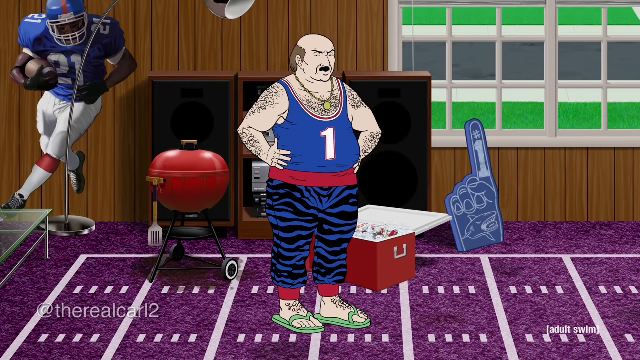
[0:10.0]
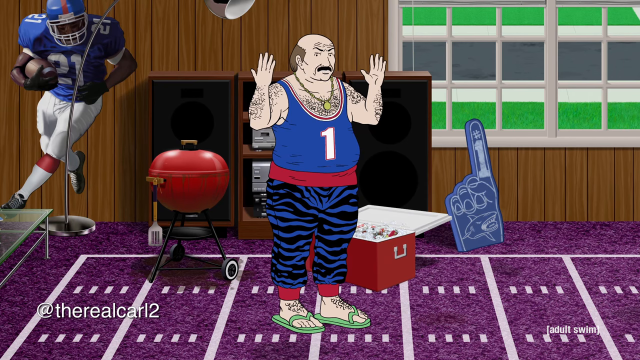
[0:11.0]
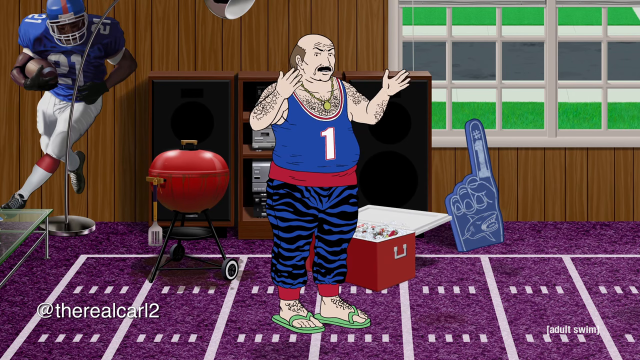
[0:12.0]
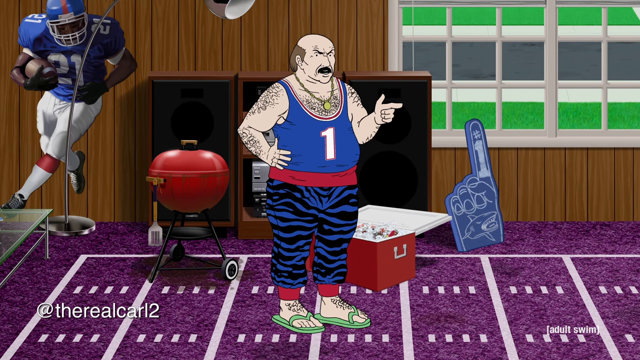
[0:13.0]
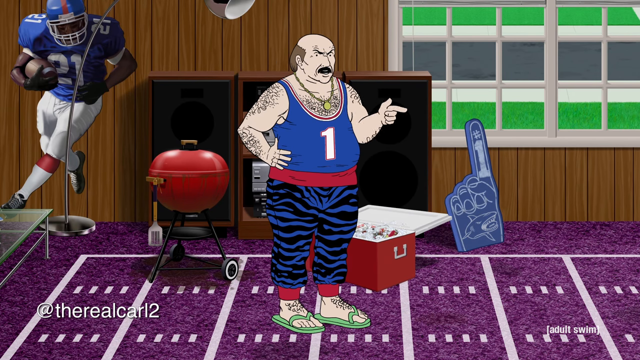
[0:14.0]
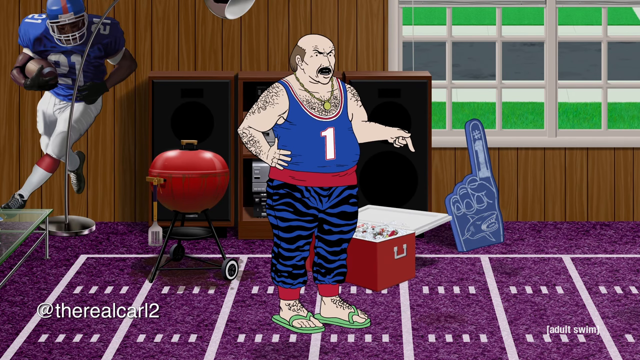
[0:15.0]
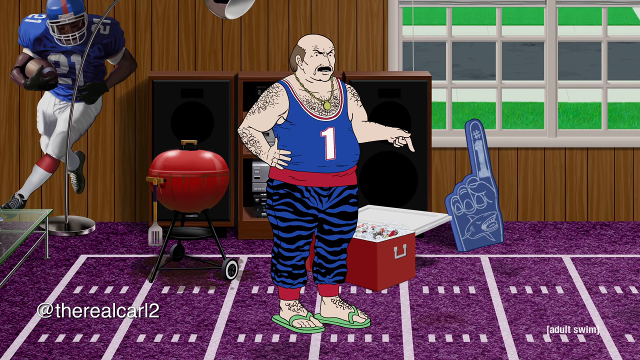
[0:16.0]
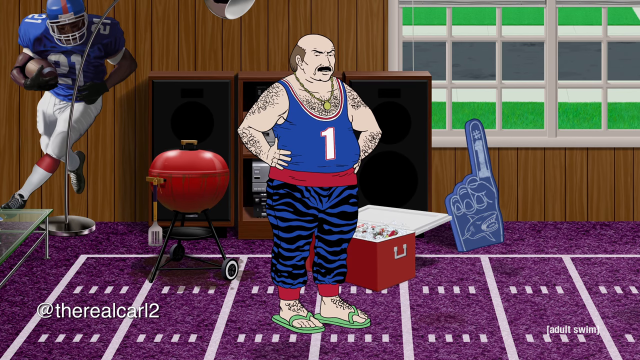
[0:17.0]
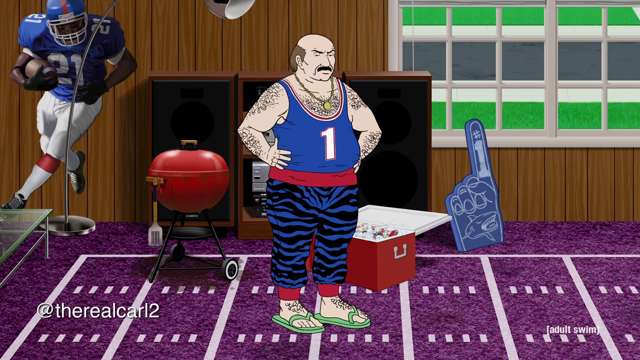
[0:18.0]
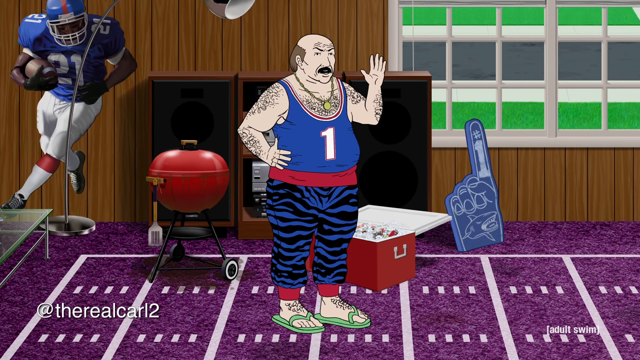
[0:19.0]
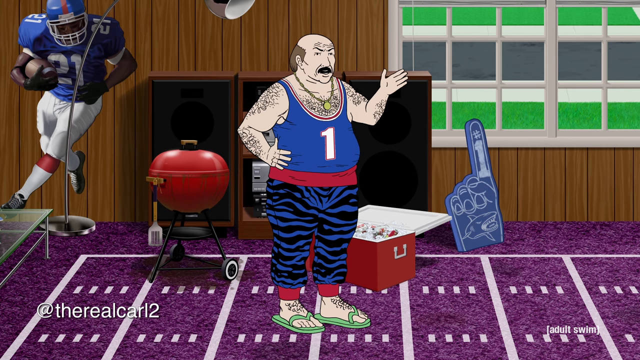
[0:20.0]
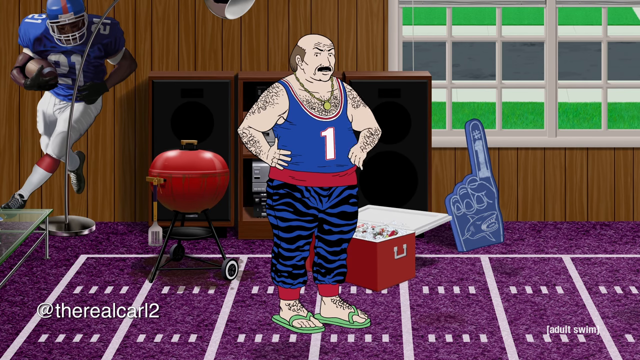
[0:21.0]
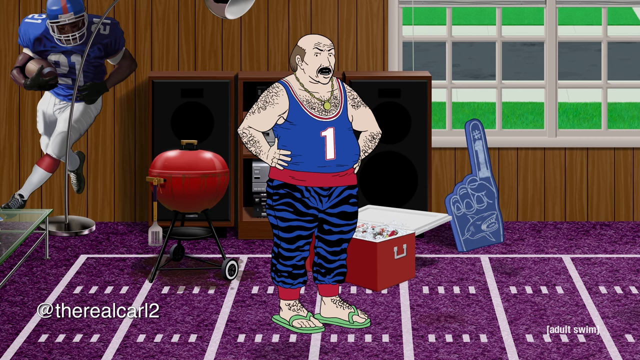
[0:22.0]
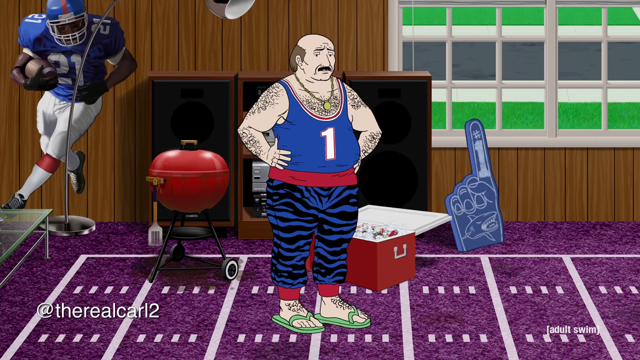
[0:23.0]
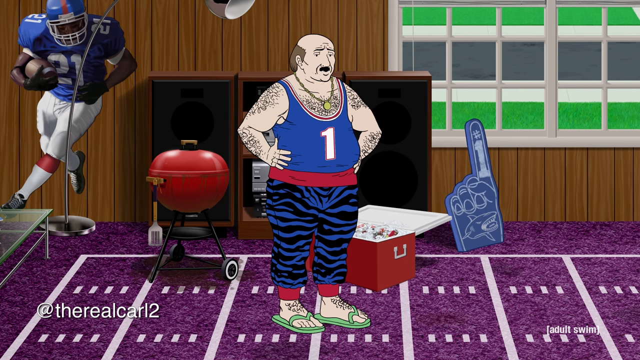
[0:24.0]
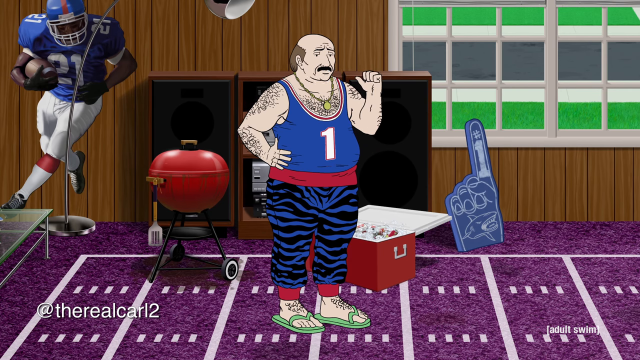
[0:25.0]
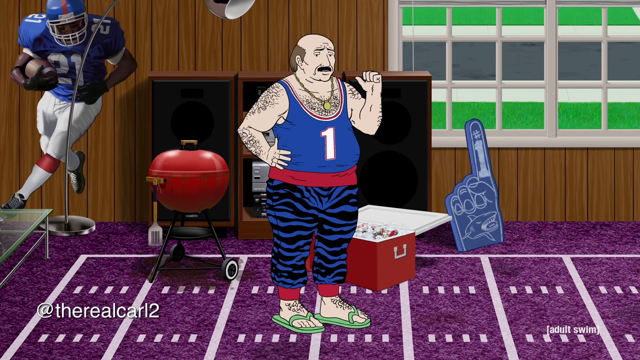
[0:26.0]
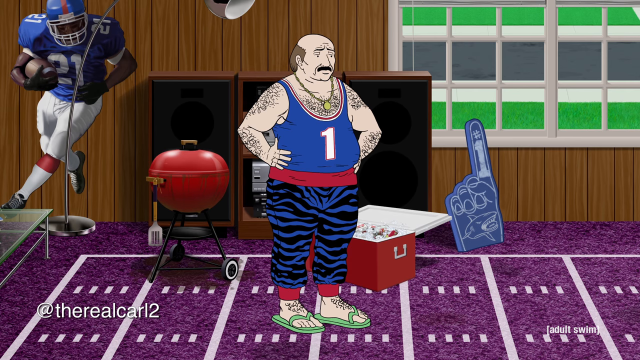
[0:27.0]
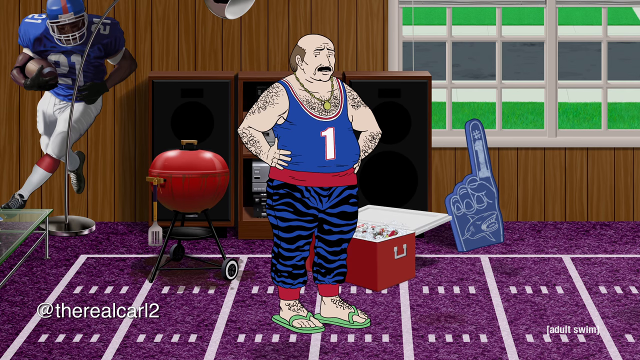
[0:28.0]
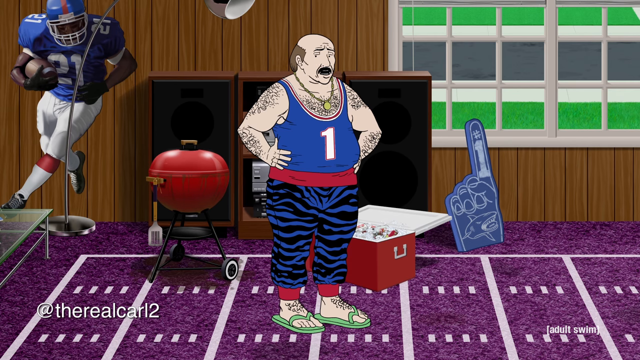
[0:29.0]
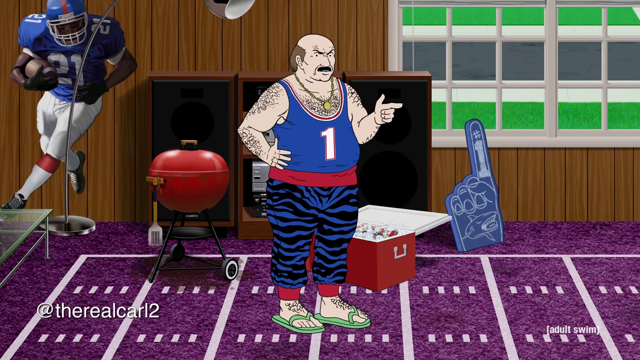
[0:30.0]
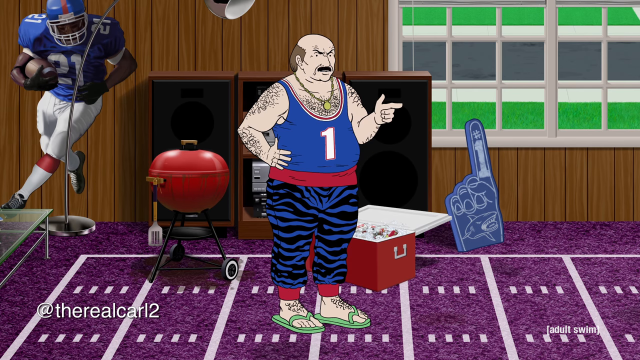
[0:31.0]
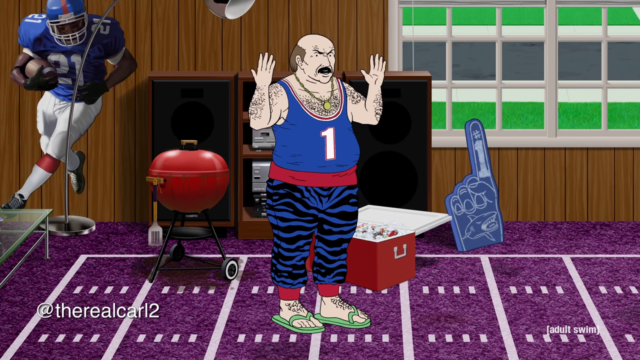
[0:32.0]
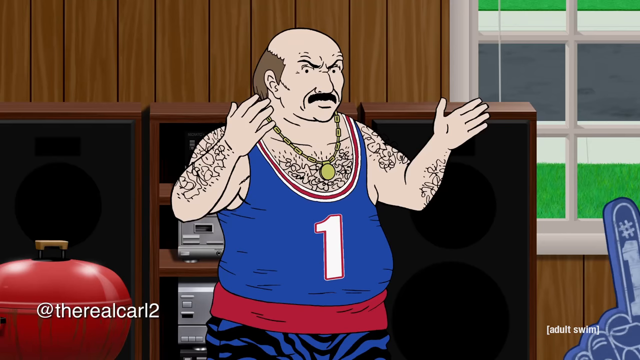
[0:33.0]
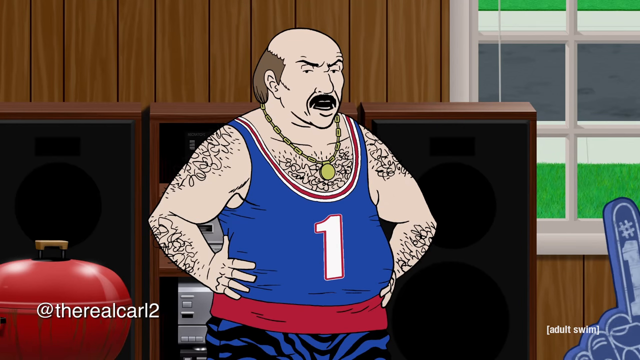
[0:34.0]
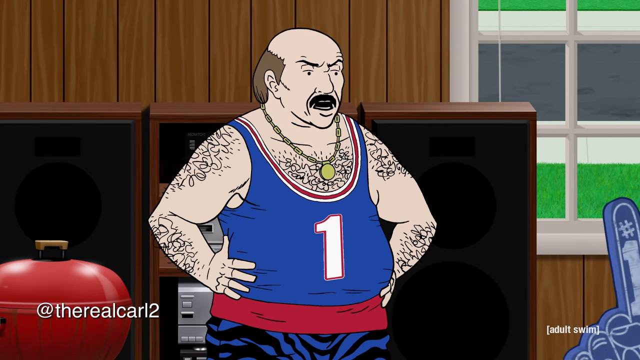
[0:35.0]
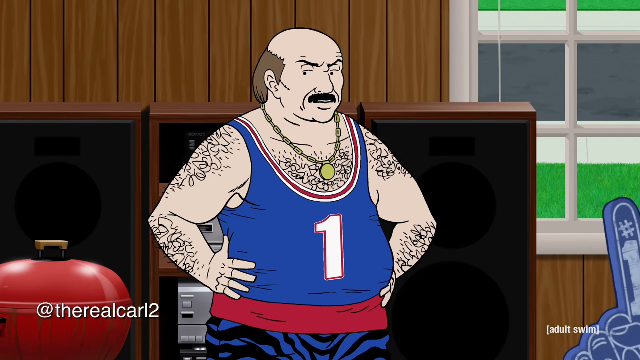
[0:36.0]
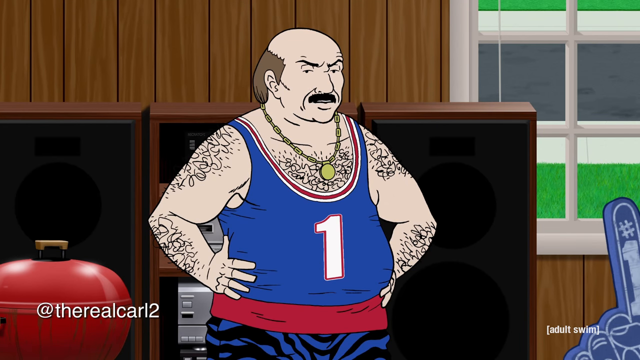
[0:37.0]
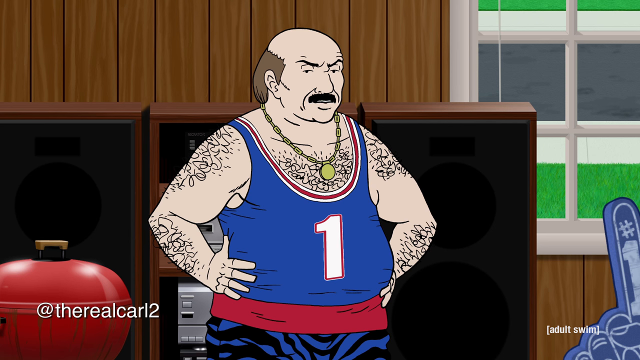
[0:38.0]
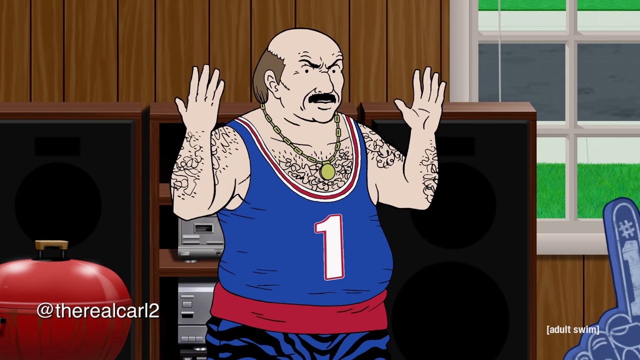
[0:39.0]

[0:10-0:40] The man at the center wears a top with number one written on it and is talking. He wears green sandals, and the purple carpet he stands on is in a house that looks like a wooden house. What seems to be a radio is on the cabinet right behind the man, and through the window green that appears to be the lawn can be seen outside. A long lamp holder stretches to where the big man is standing. Behind him is a man wearing an American football uniform, holding something that looks like a ball; he appears to be running, but he is not standing on the ground. Next to him, on the side, is a red three-legged braai stand with wheels on it. Next to the man at the center is an open red cooler box that looks filled up with items.